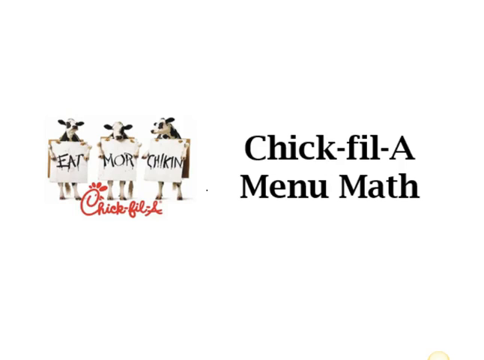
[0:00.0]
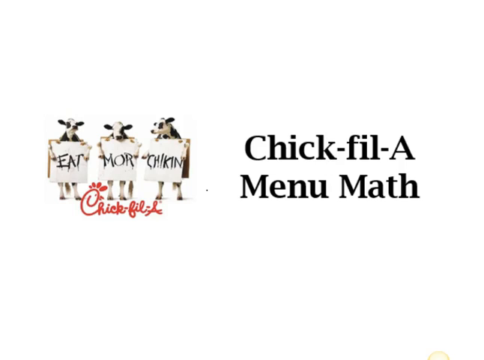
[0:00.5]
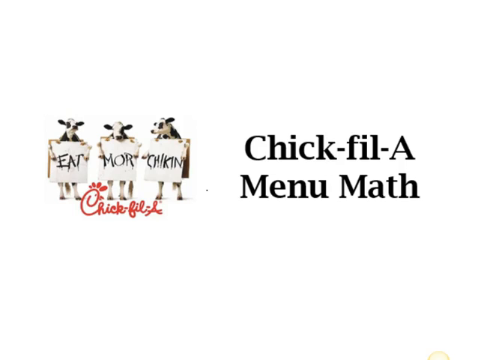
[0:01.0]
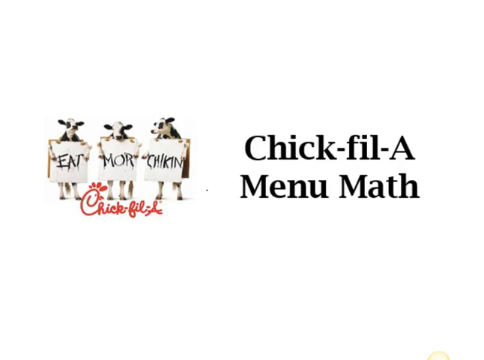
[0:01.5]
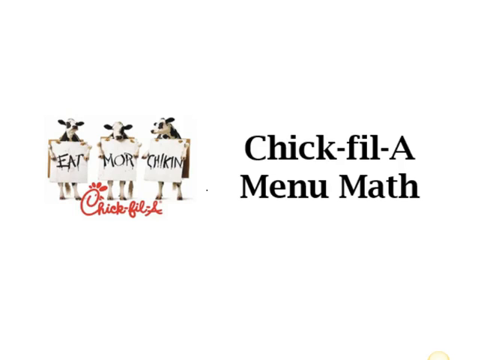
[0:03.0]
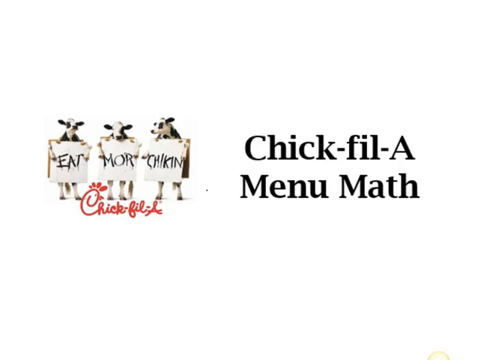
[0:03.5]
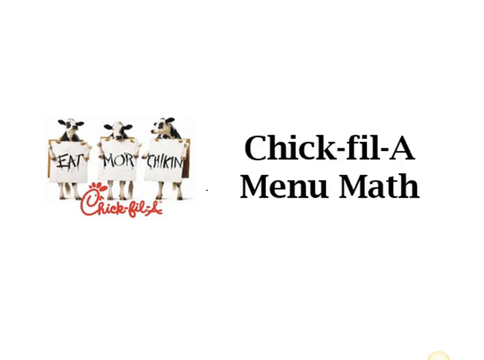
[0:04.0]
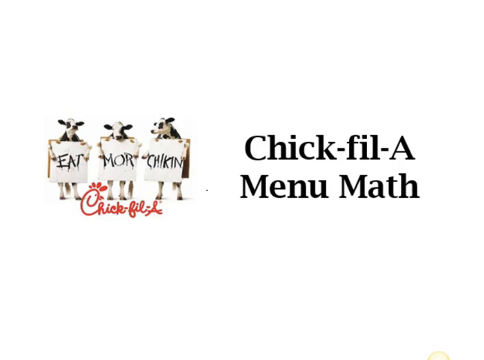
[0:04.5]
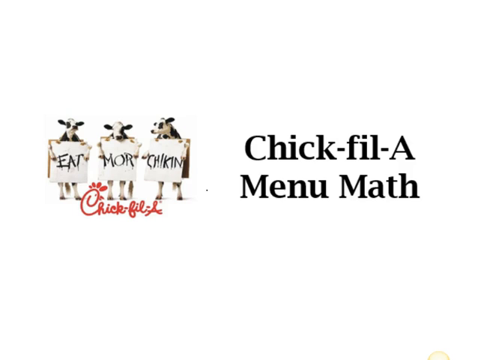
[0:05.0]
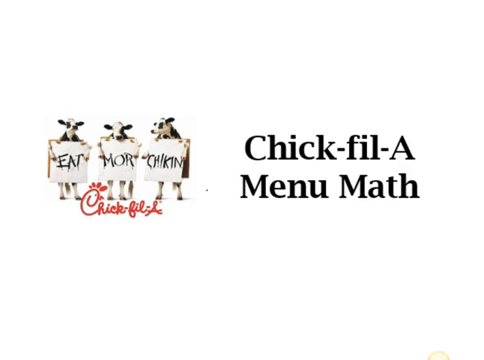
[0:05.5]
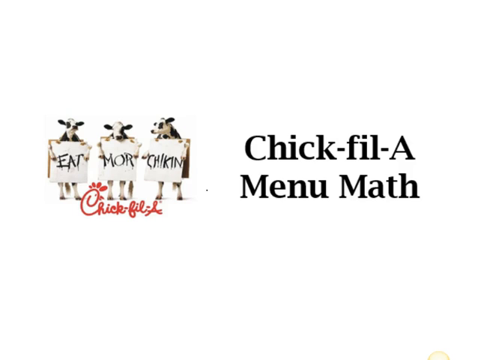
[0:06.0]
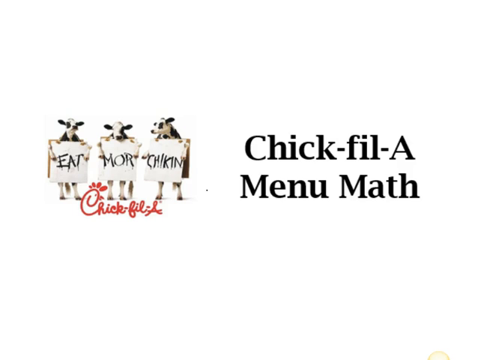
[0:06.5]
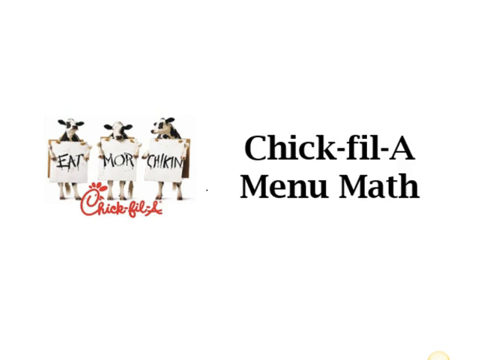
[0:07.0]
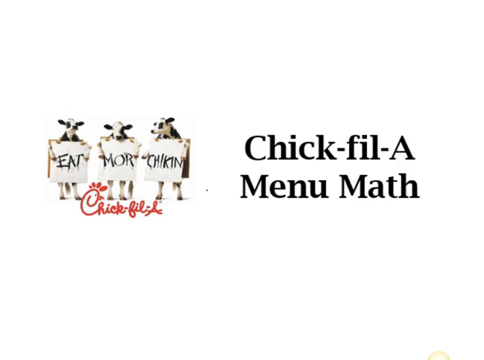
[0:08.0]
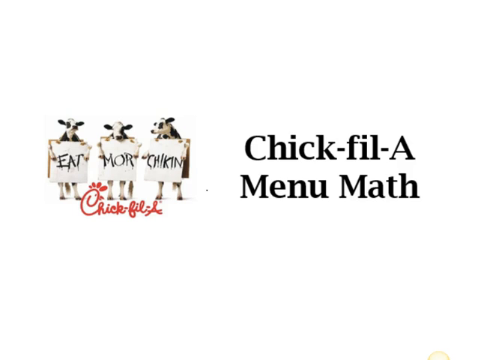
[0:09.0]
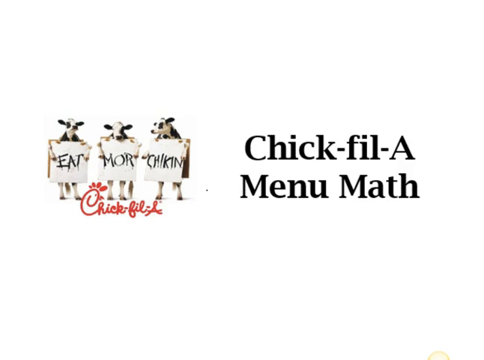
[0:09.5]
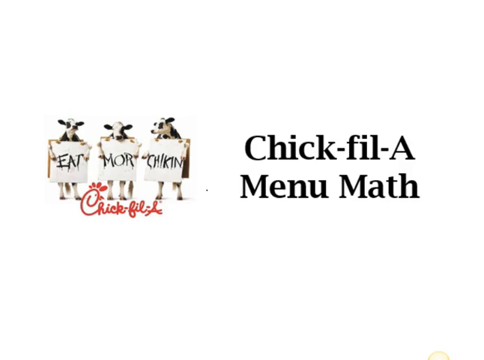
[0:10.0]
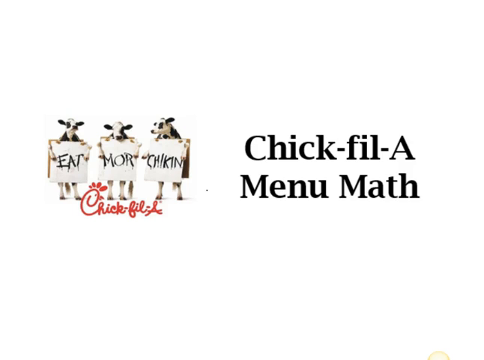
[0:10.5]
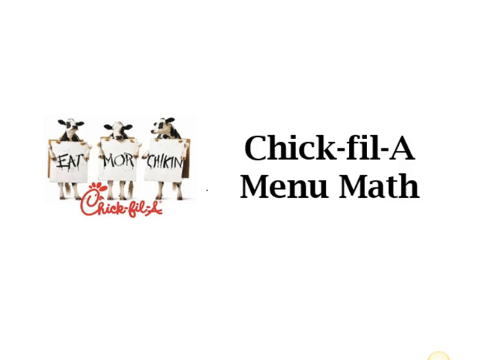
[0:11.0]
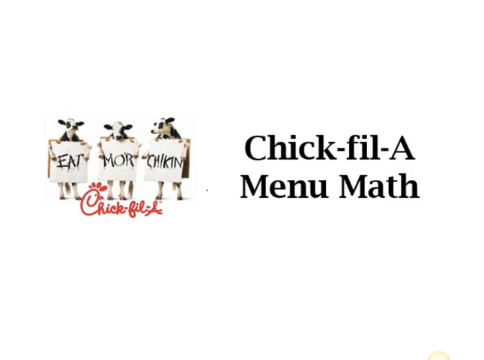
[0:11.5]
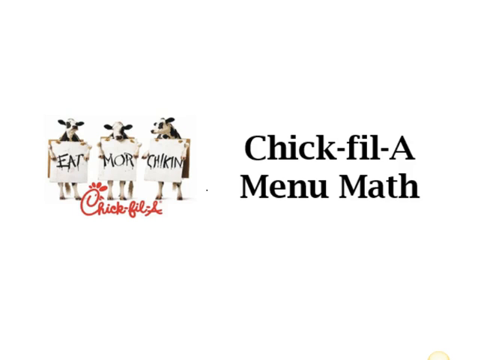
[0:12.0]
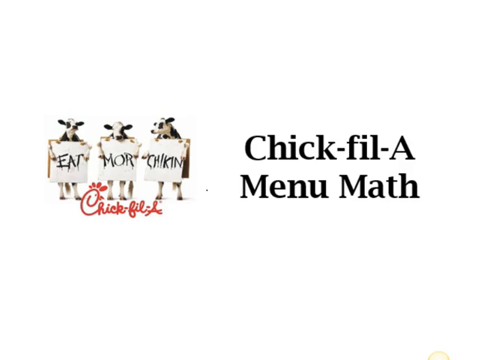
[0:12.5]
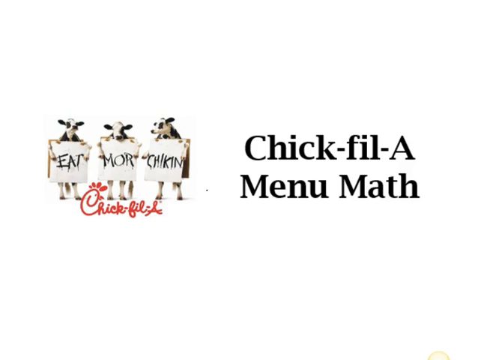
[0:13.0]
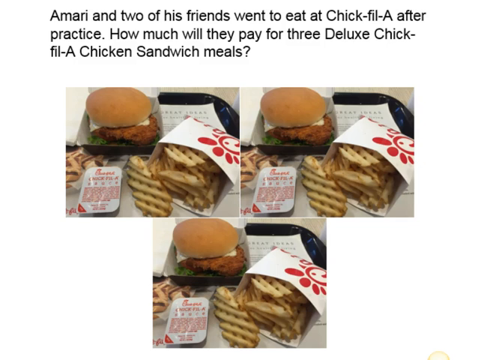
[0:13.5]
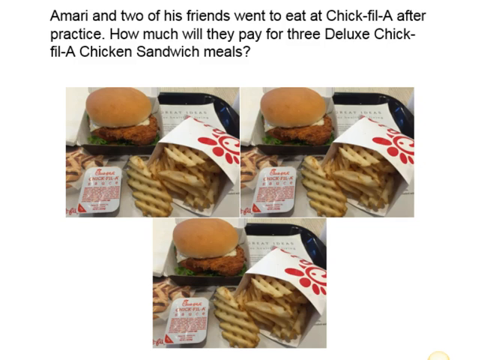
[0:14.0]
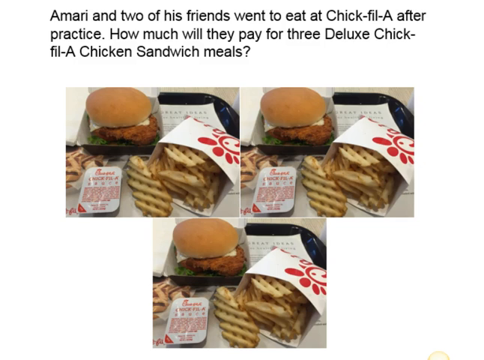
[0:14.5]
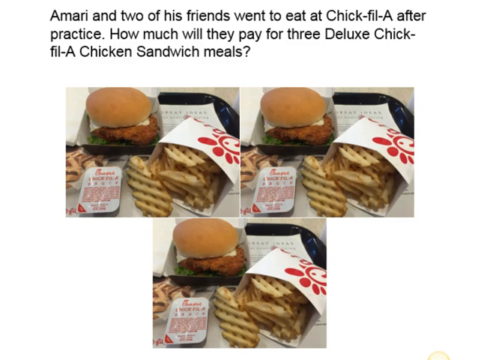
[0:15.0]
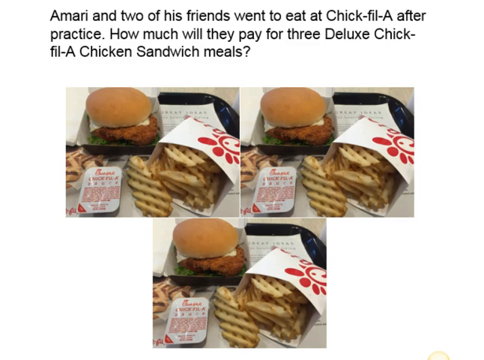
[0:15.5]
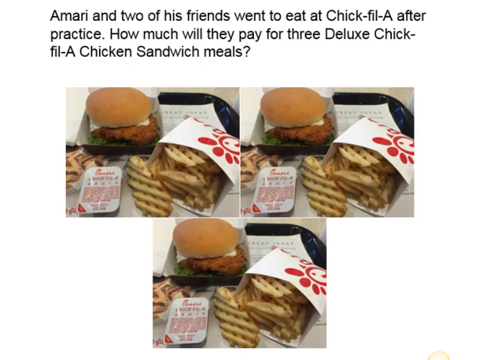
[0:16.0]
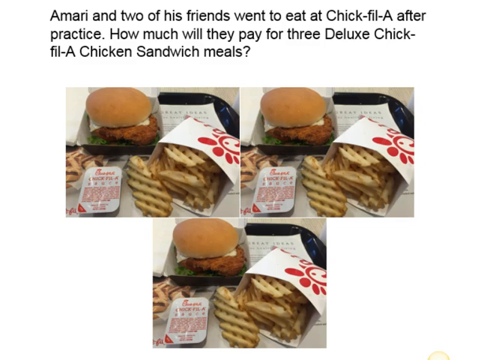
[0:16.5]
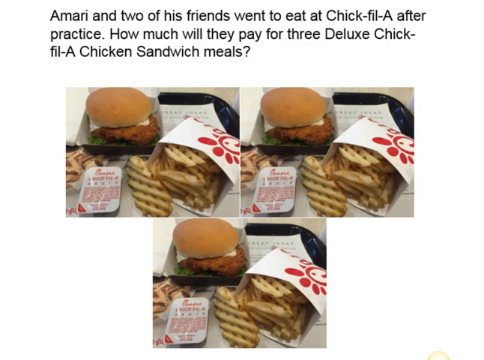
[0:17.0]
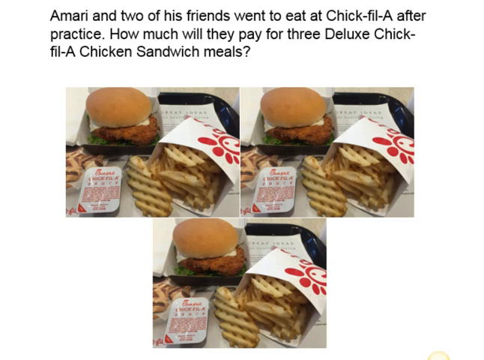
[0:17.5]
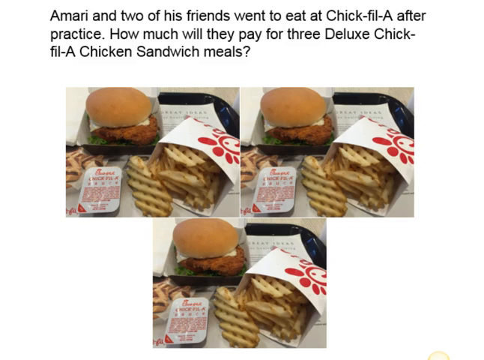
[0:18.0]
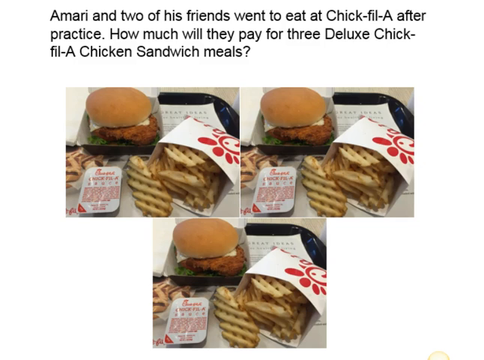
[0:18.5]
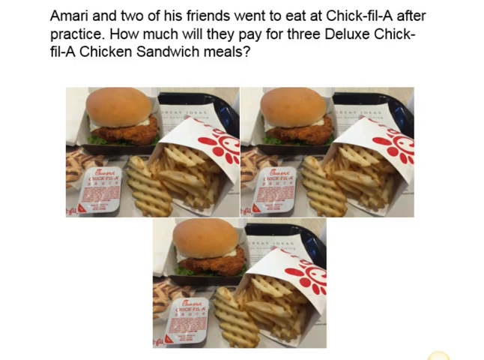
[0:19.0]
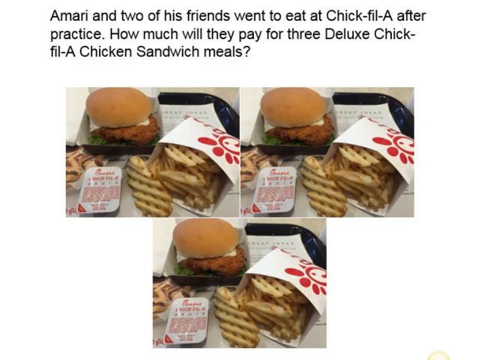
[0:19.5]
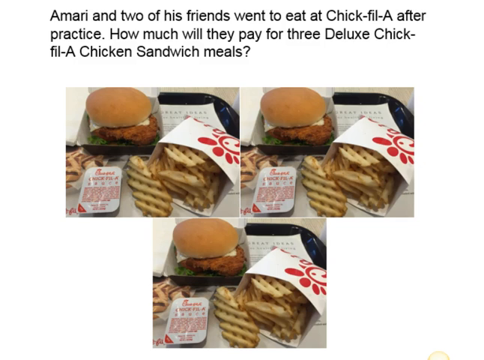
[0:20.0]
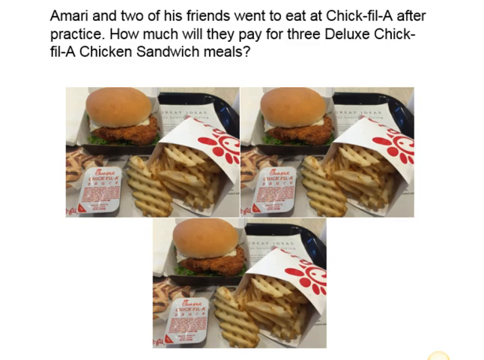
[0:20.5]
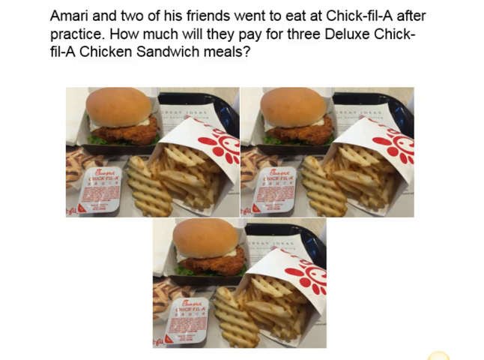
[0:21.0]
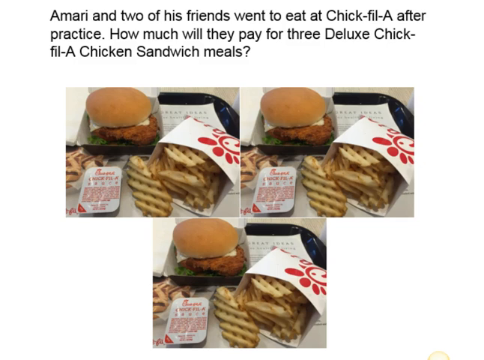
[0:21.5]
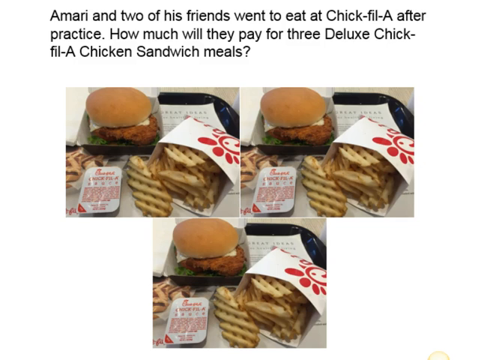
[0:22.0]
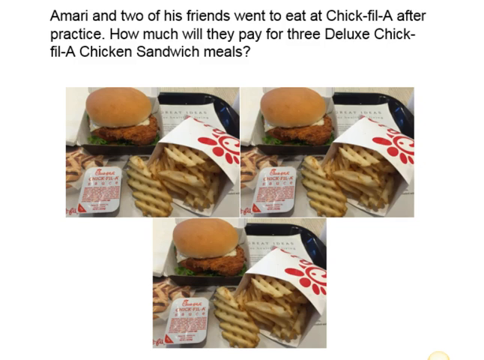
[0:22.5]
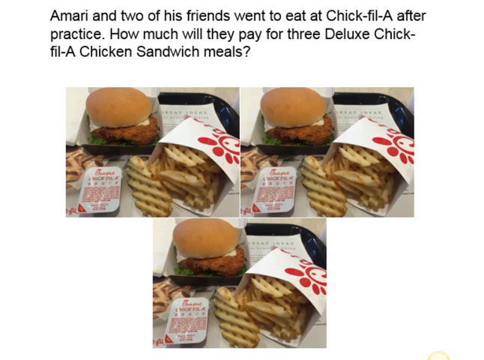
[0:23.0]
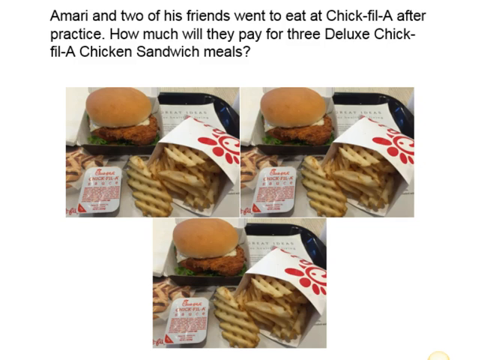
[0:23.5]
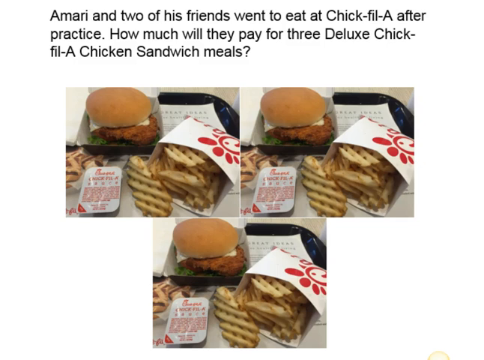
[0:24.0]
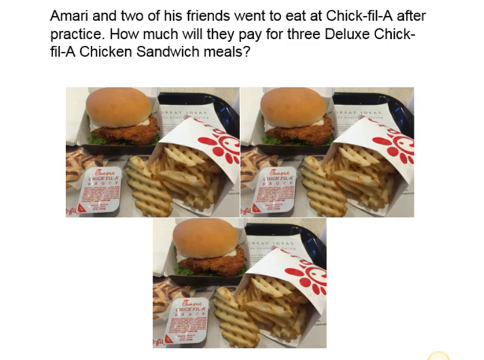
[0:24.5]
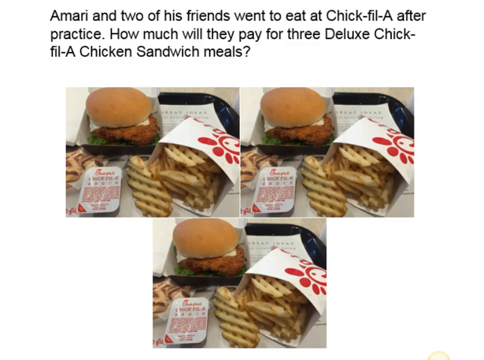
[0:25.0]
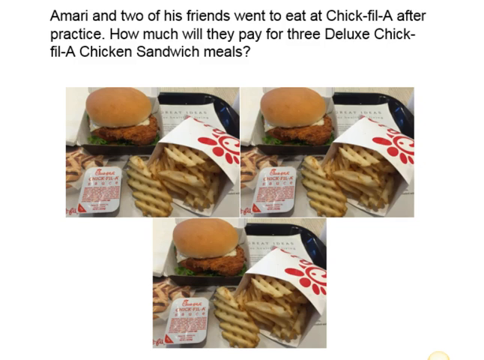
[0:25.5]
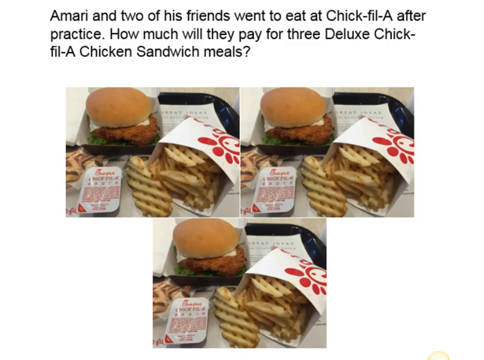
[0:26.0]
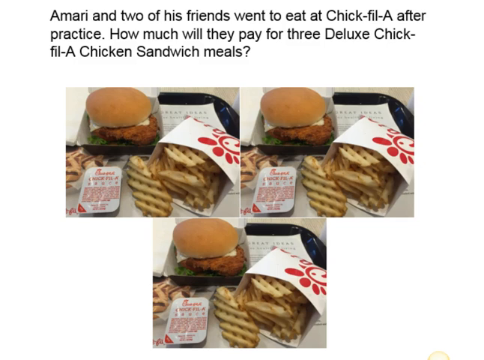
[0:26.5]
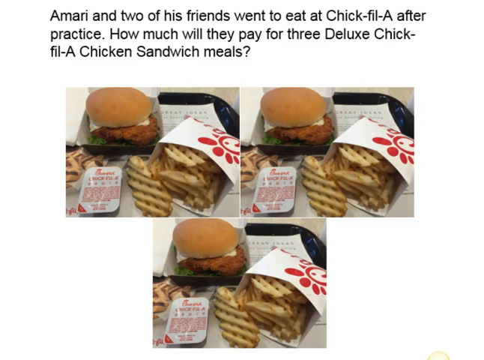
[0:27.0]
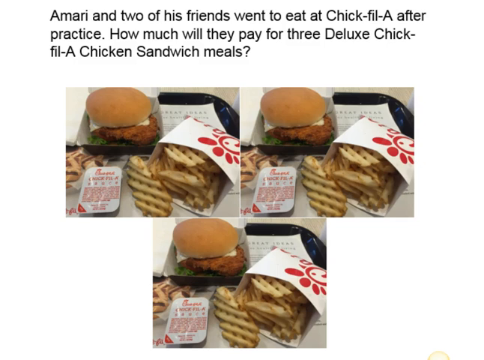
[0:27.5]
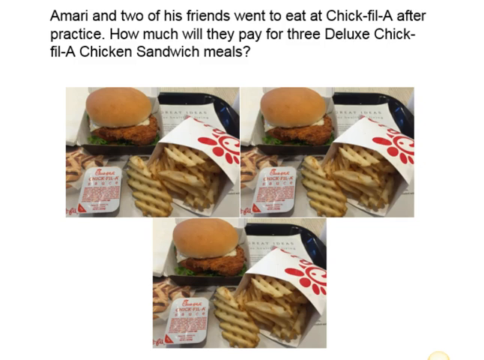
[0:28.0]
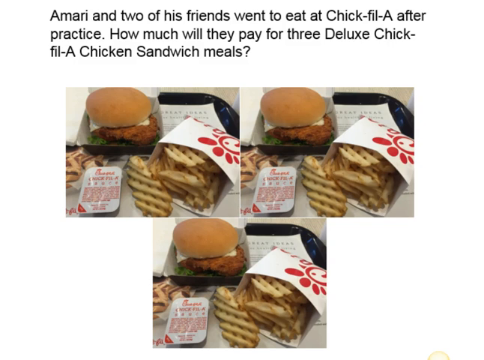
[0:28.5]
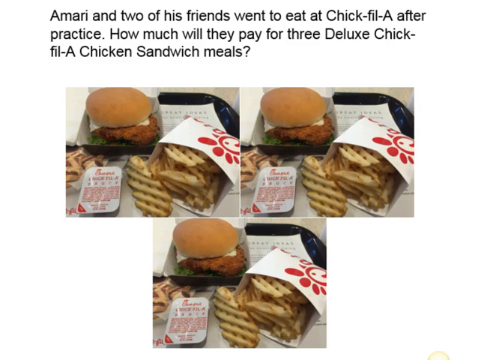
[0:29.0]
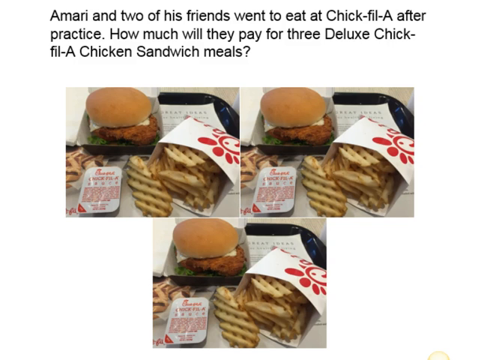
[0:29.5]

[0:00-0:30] The Chick-fil-A logo opens the video. On the left is a picture of three cows, each holding up a sign, together spelling out "eat more chicken." Underneath is the red Chick-fil-A sign. On the right side the text reads "Chick-fil-A menu math." This stays on screen for about 13 seconds, and then a screen appears with three small pictures of the same items, two on the top row and one on the bottom row. Each picture shows a Chick-fil-A sandwich on a tray with waffle fries and a sauce in front of the fries. The Chick-fil-A logo is visible on all of the fry cartons, and Chick-fil-A information is on the sauce carton.